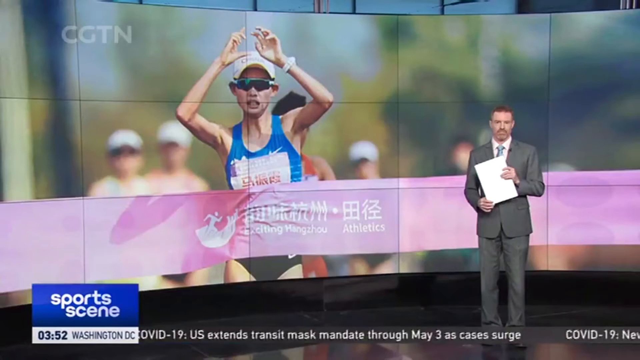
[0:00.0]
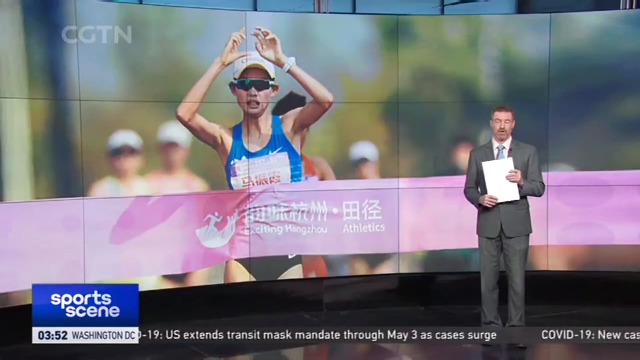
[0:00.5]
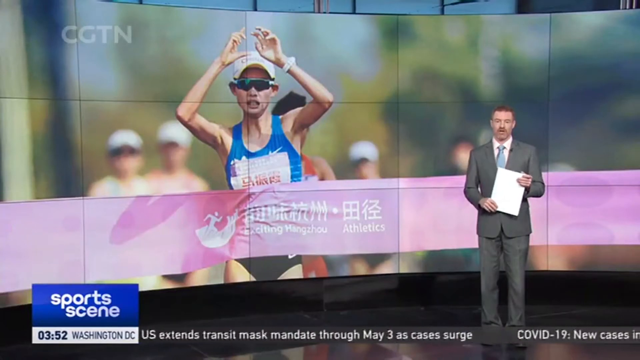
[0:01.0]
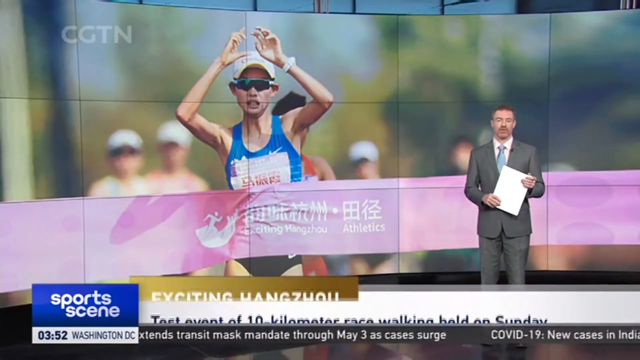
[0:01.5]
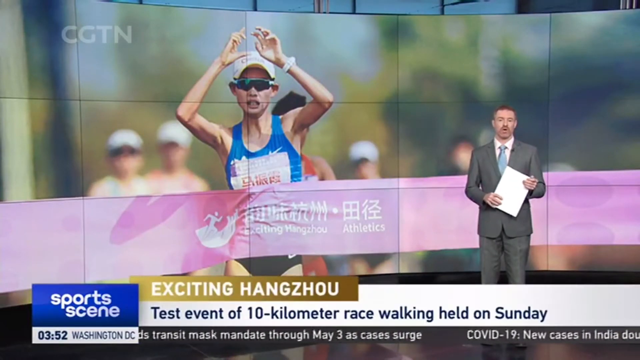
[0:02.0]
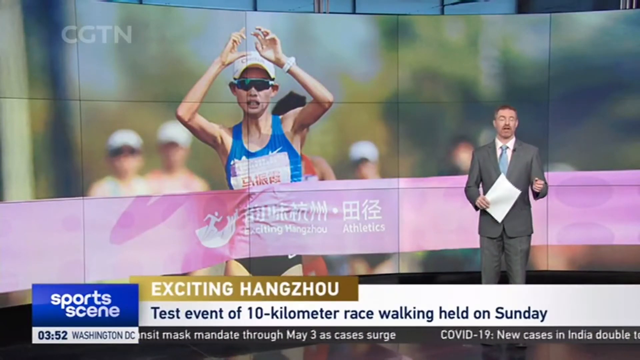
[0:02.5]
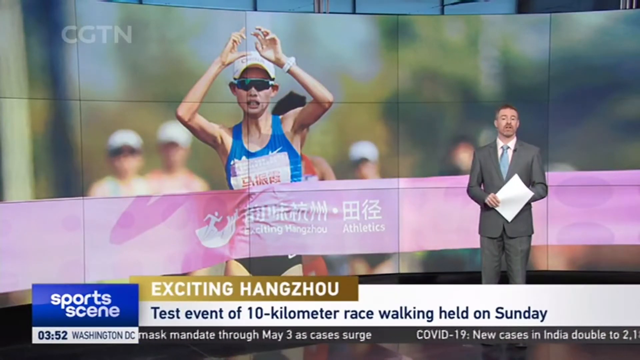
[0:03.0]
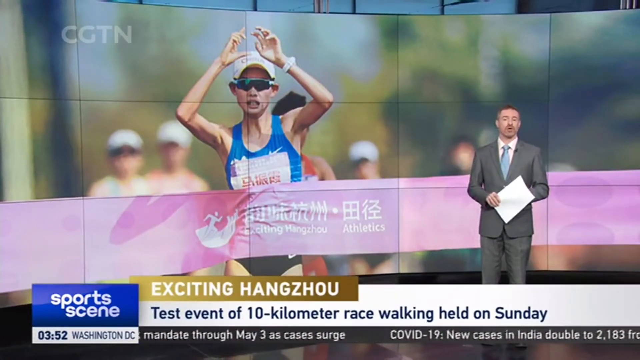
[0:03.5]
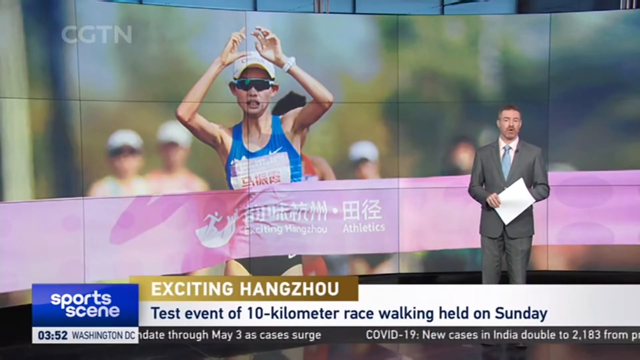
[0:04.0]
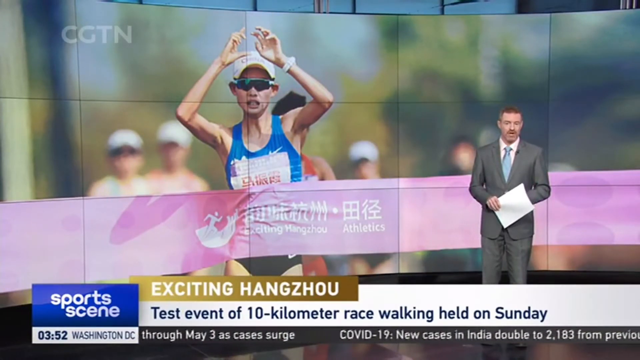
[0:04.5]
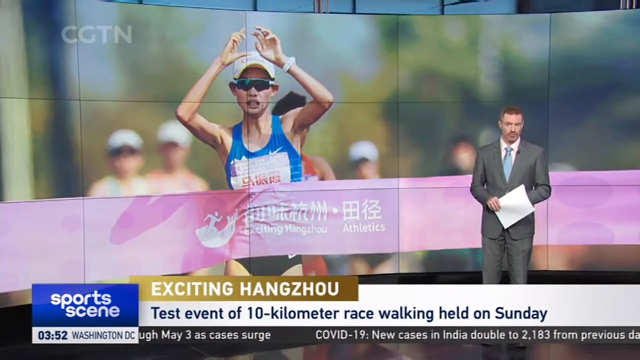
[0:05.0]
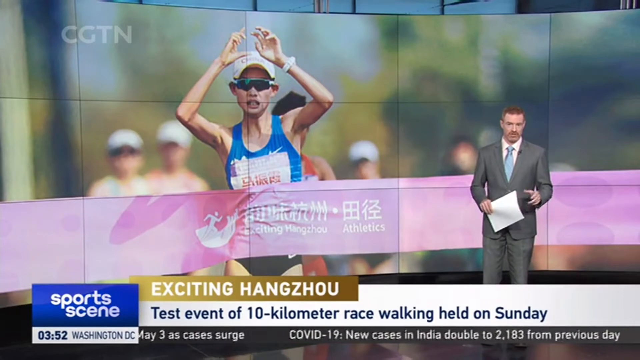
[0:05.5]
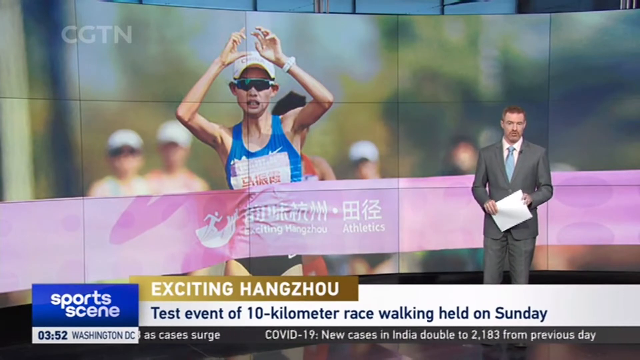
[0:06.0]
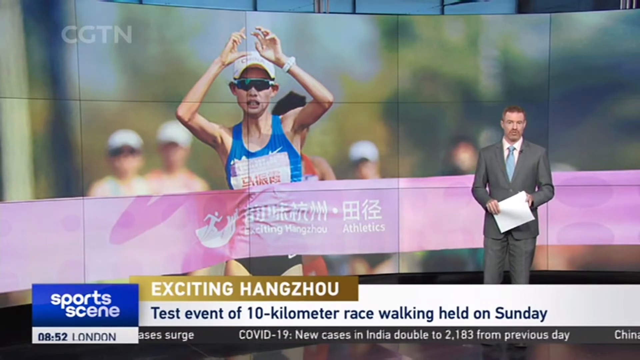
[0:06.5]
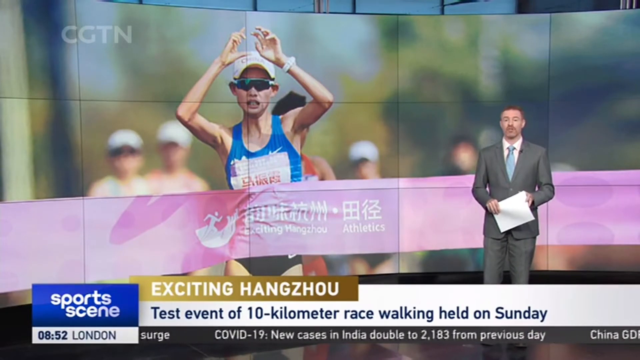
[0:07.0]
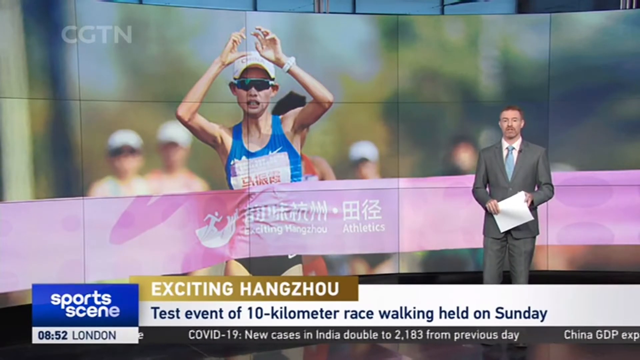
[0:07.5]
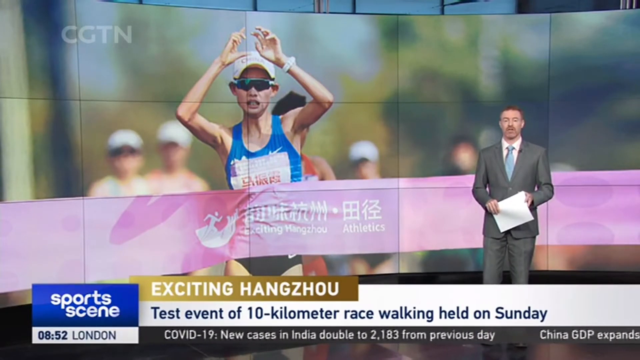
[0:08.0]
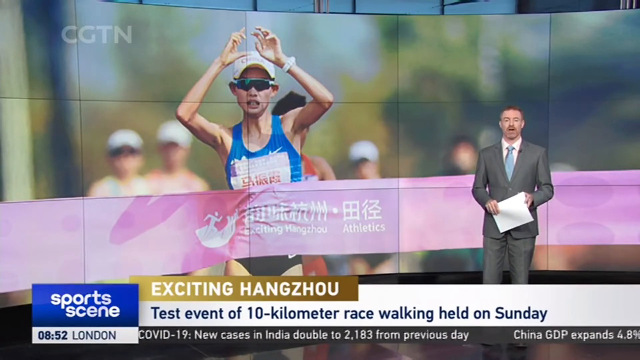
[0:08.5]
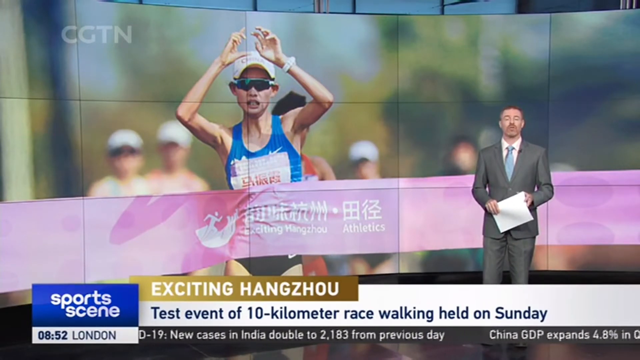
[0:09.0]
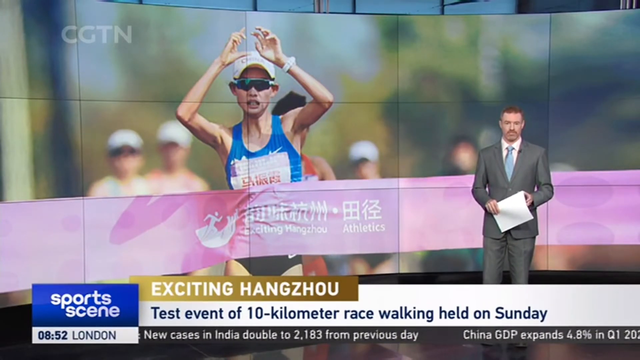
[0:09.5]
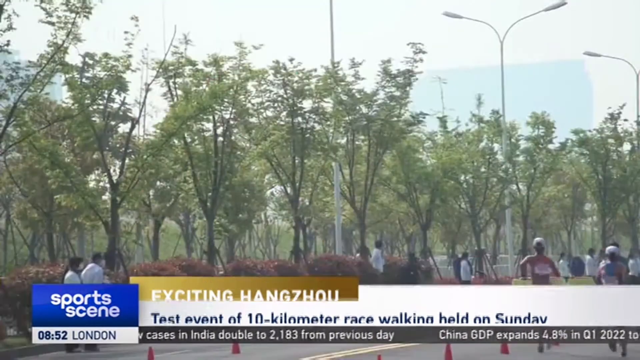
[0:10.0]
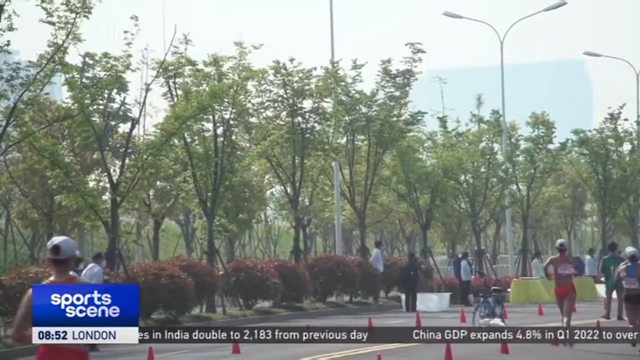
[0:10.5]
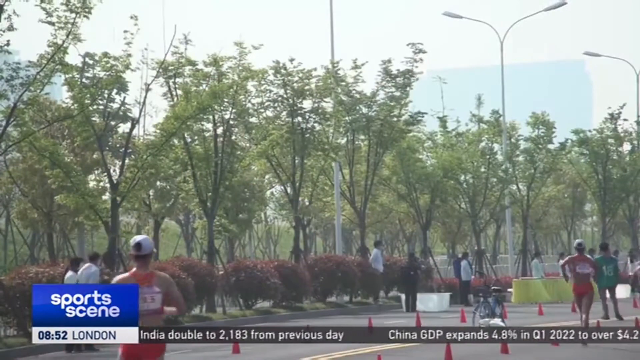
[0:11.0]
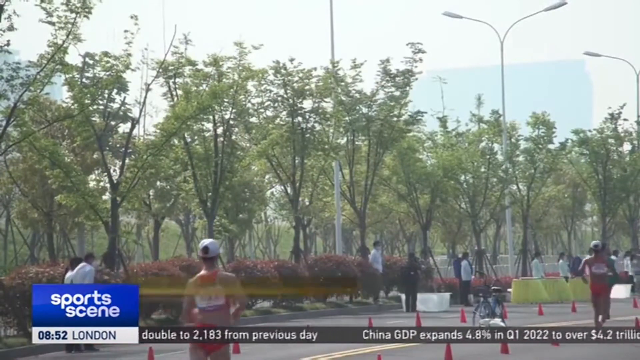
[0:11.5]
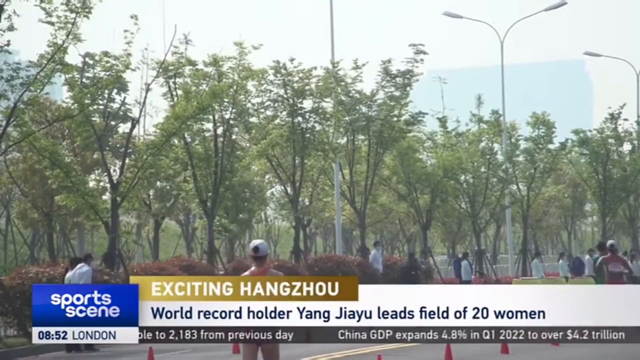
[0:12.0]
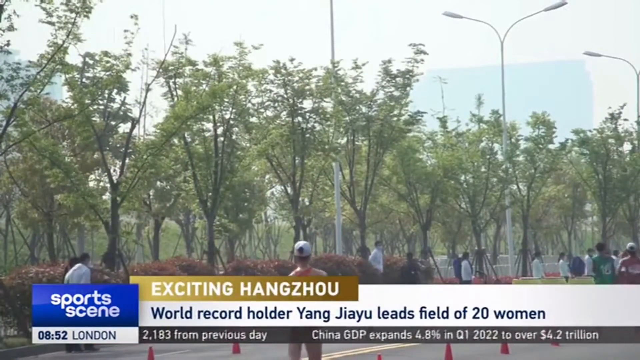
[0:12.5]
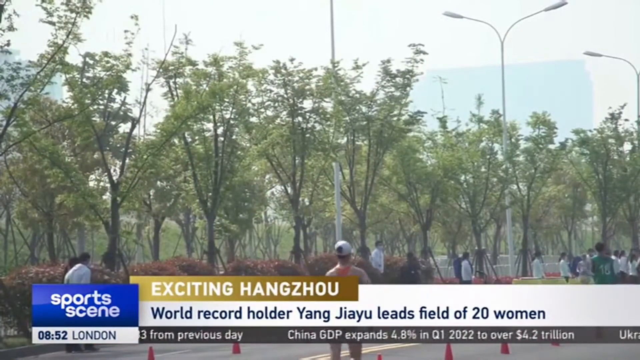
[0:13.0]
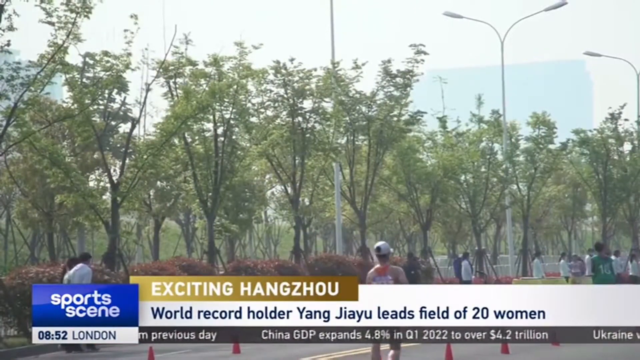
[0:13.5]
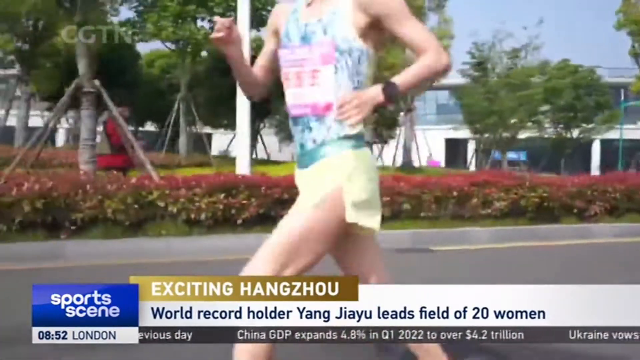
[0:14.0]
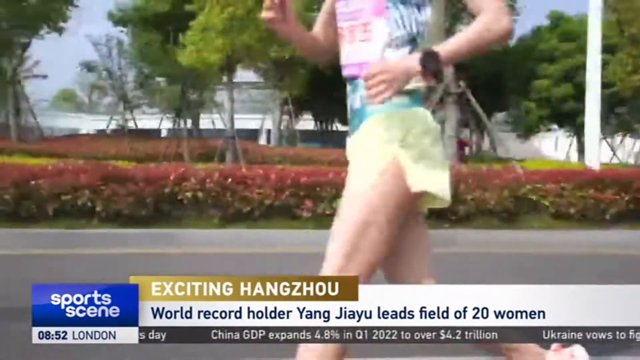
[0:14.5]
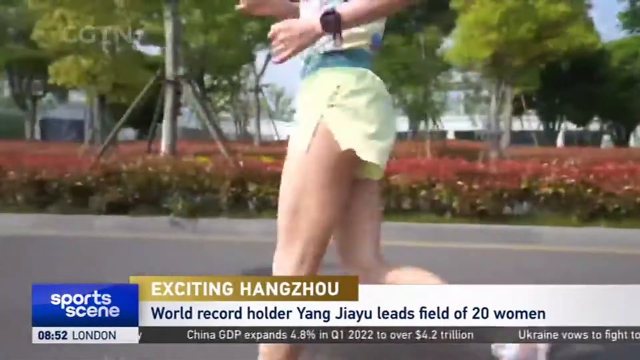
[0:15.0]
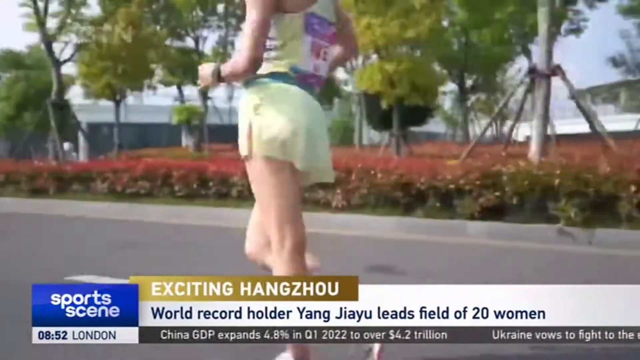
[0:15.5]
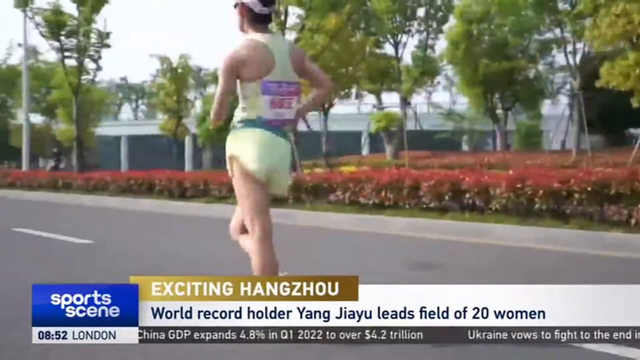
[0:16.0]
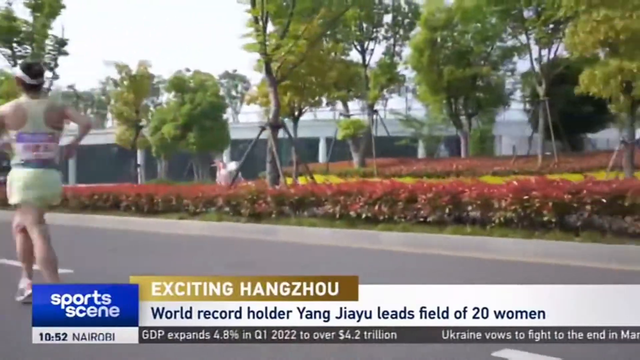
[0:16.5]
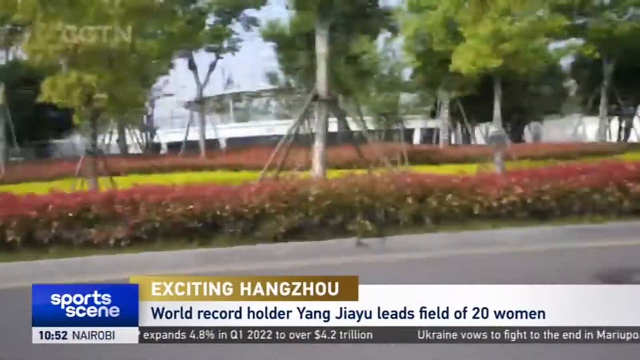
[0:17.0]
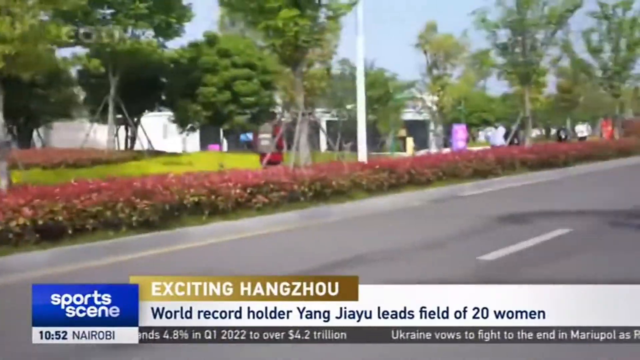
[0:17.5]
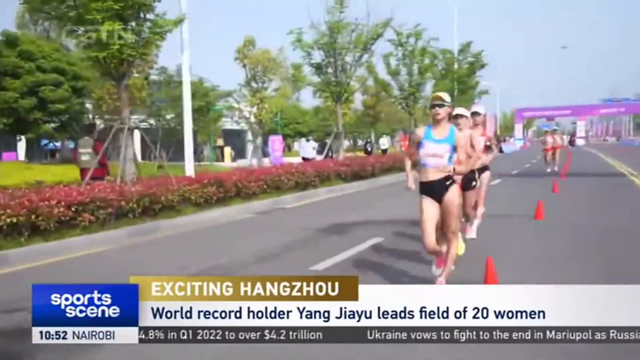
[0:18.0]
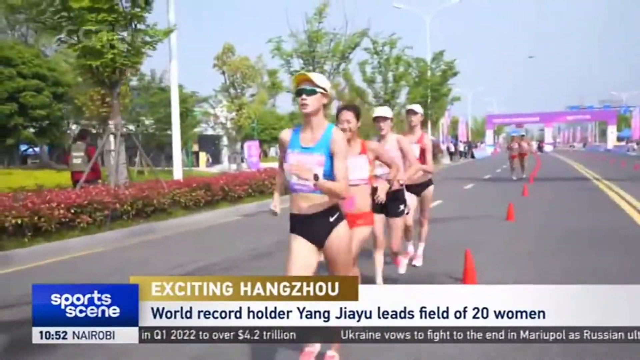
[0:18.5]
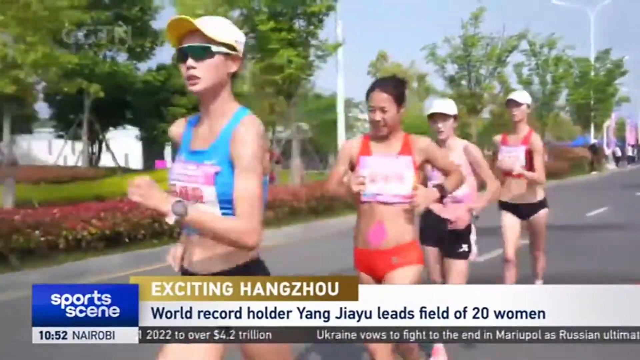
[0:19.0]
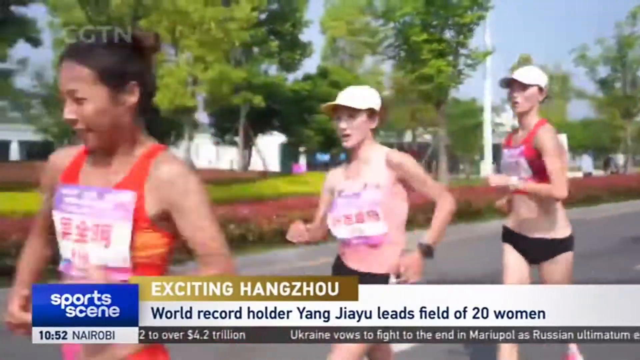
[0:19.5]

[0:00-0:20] A reporter on the right-hand side holds a document, while the left-hand side shows an image of a marathon runner. Text below reads "exciting Hangzhou test event of 10 kilometer race walking held on Sunday." It is a sports news station covering the marathon. The reporter, who wears a gray suit, continues to speak, seen from the front though far from the camera. The video then changes to people running in an outdoor environment with trees along in a row. The camera zooms in on a runner going down a road, then turns to the right to show the entire road behind that runner, where many other runners are catching up.